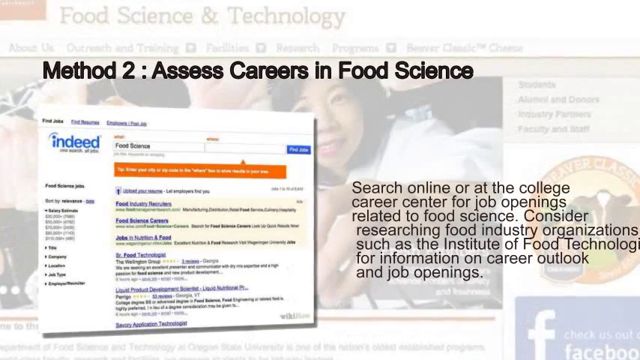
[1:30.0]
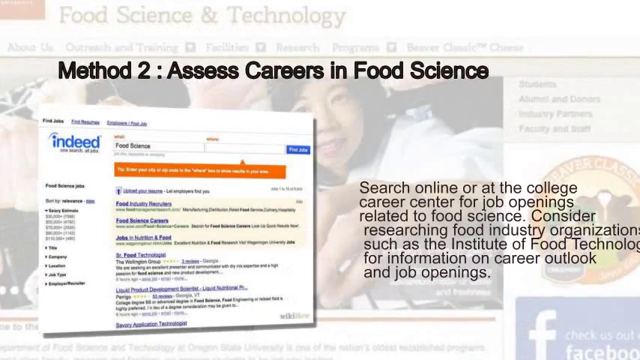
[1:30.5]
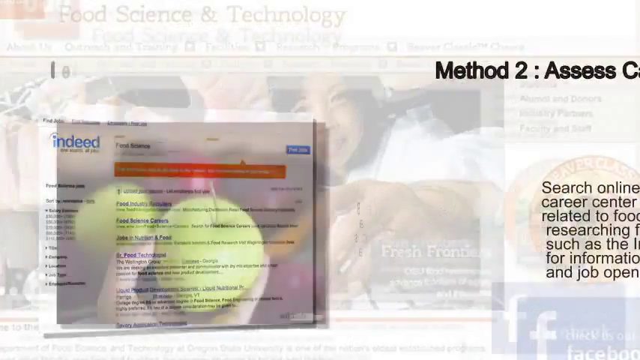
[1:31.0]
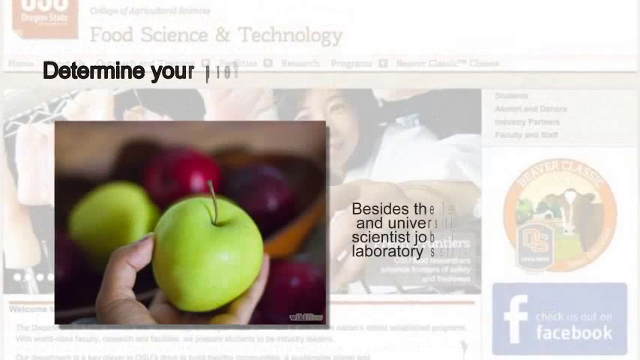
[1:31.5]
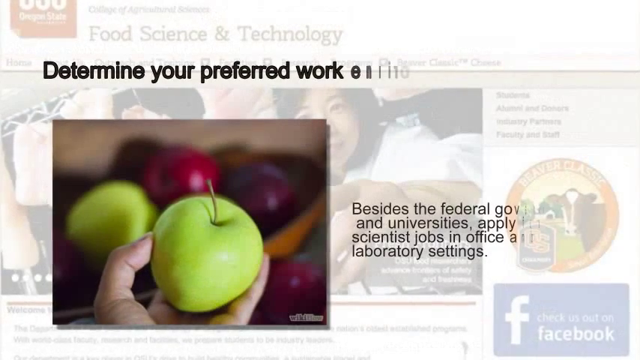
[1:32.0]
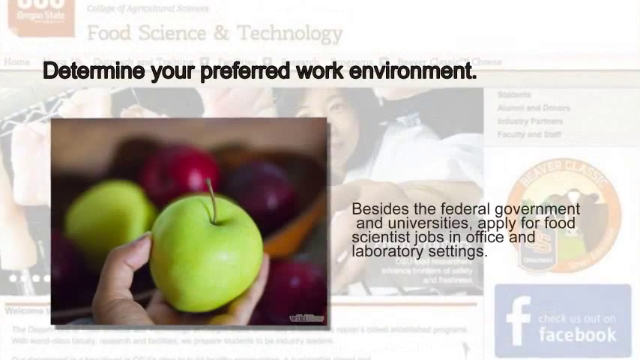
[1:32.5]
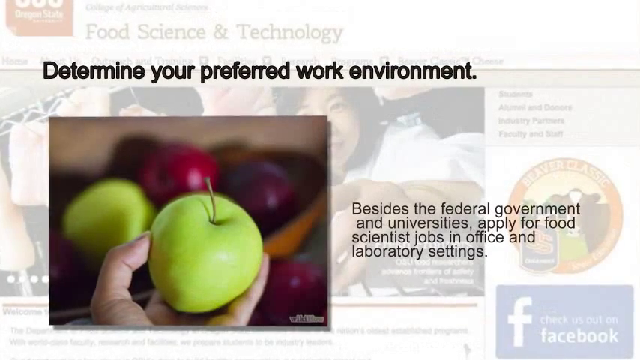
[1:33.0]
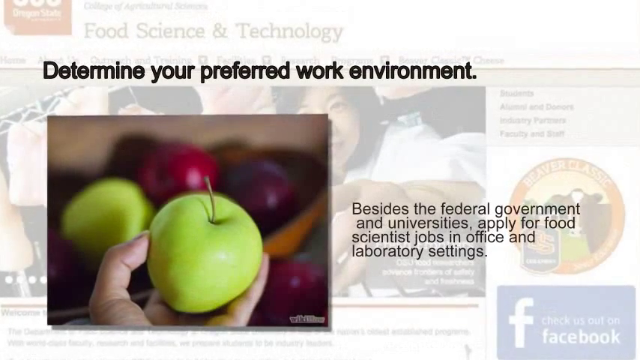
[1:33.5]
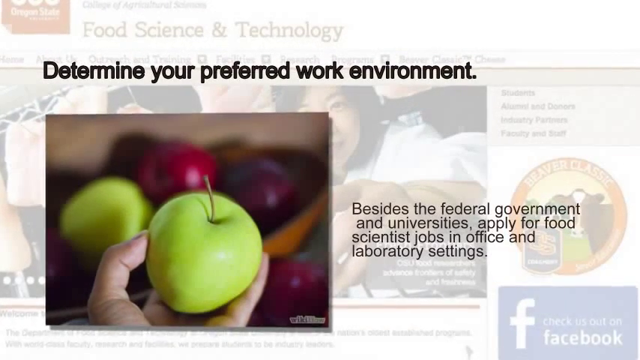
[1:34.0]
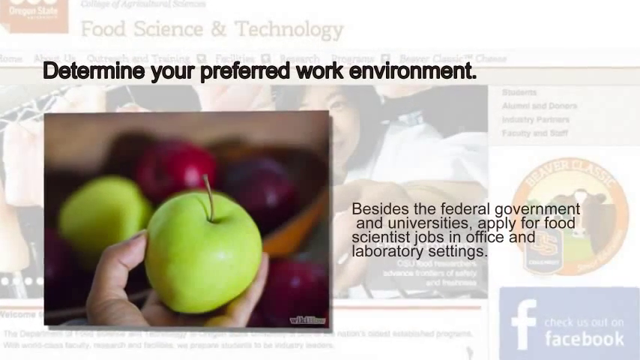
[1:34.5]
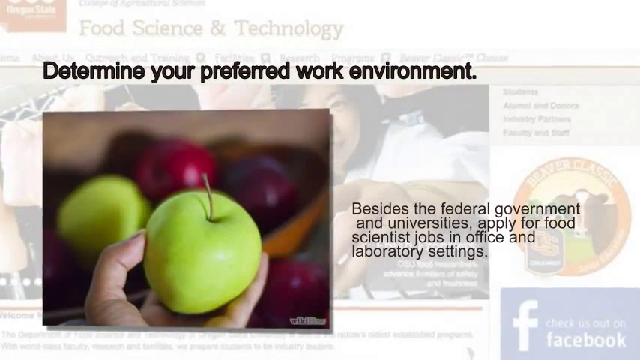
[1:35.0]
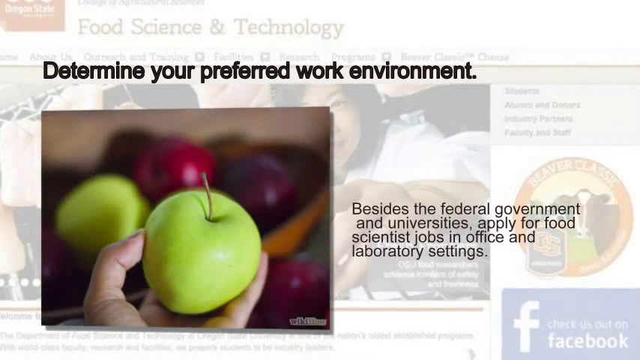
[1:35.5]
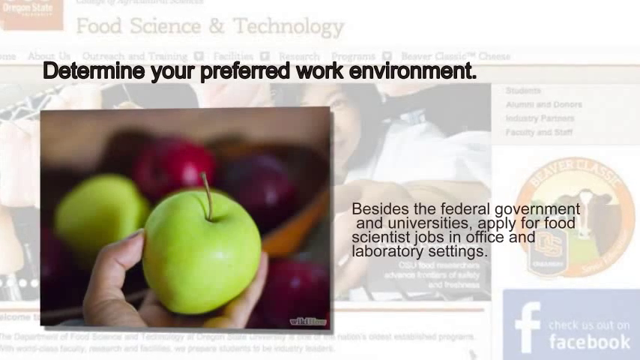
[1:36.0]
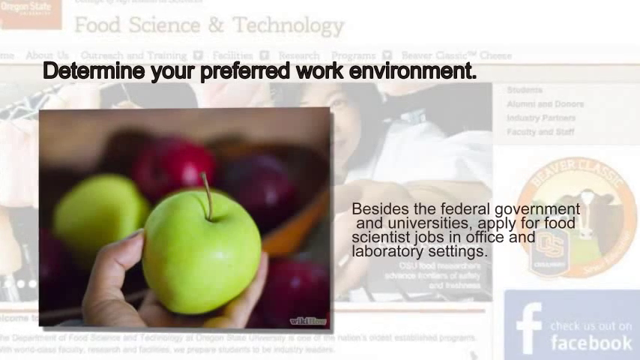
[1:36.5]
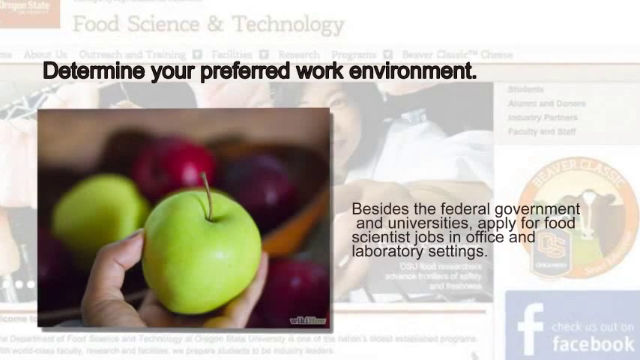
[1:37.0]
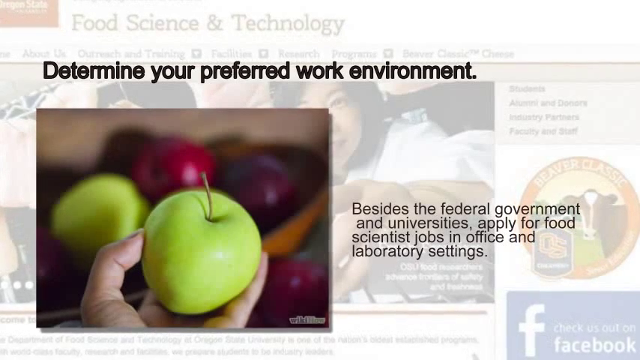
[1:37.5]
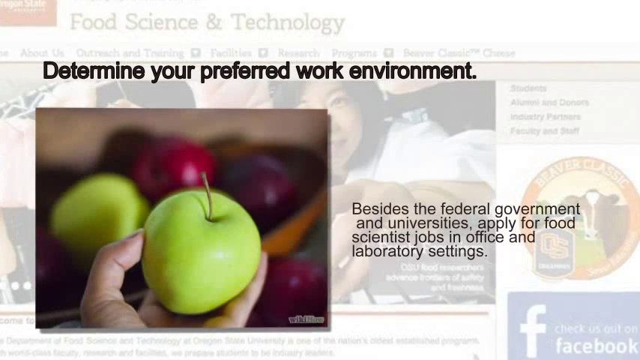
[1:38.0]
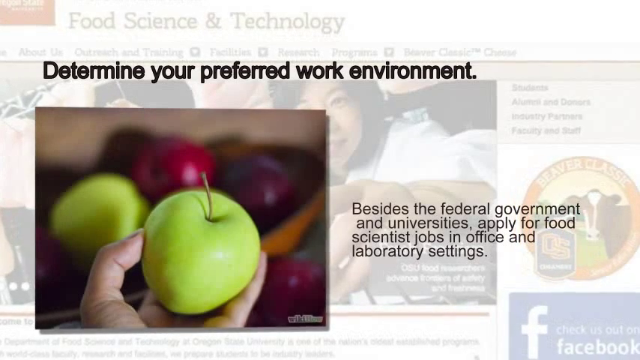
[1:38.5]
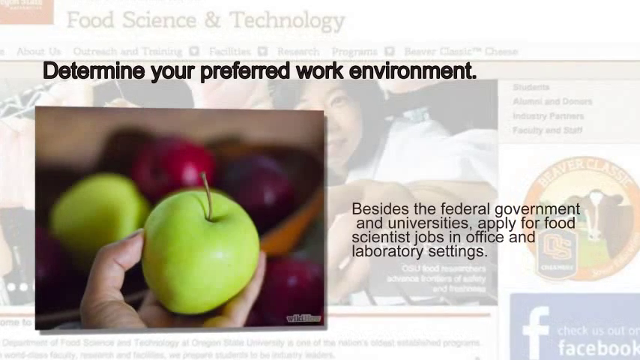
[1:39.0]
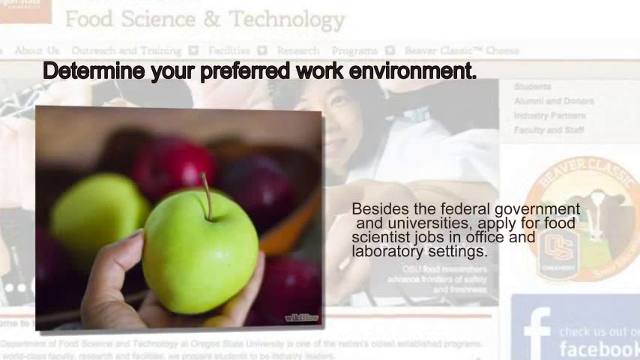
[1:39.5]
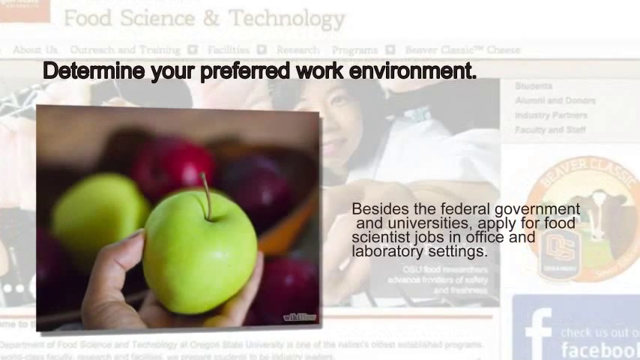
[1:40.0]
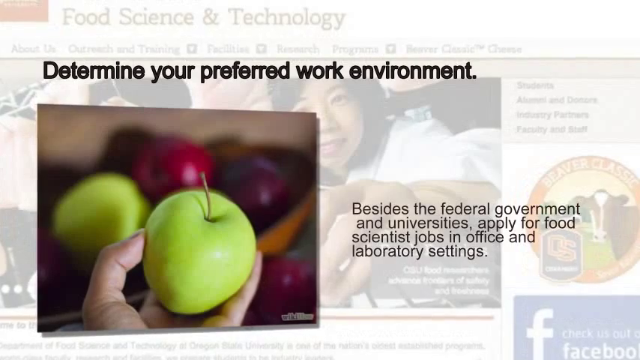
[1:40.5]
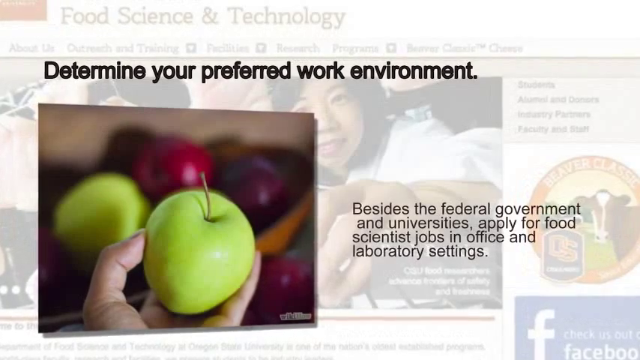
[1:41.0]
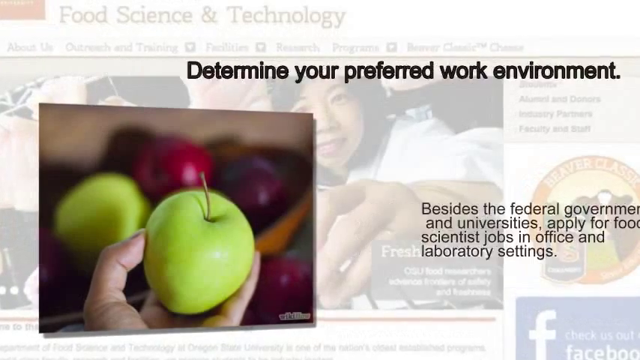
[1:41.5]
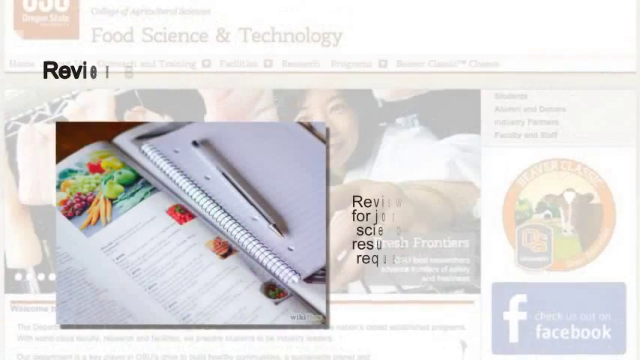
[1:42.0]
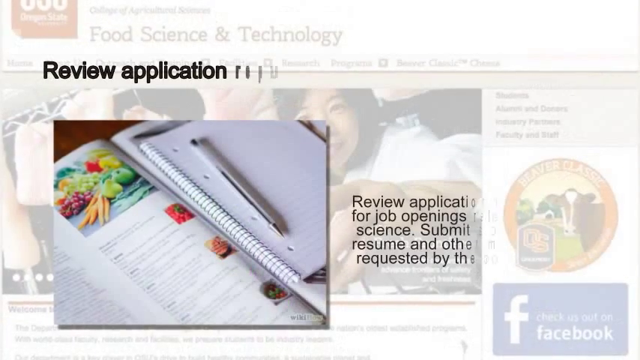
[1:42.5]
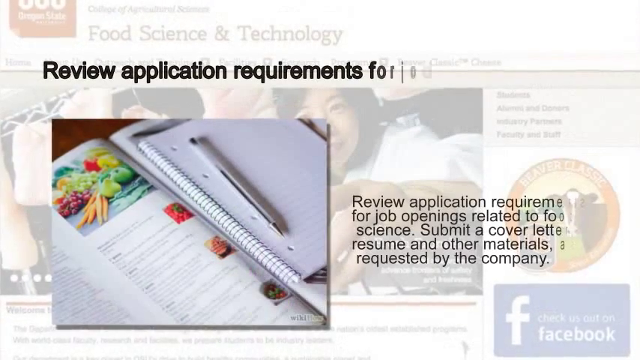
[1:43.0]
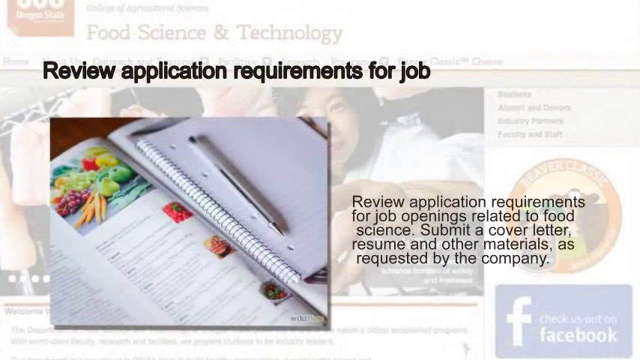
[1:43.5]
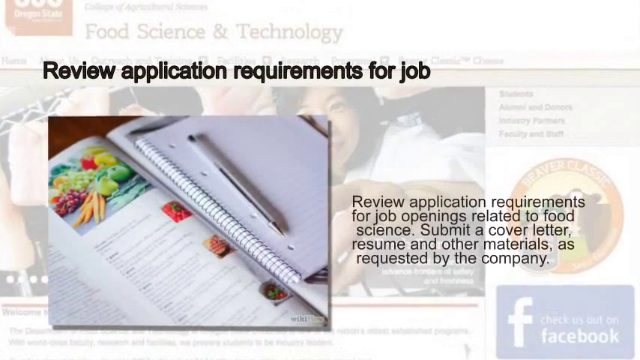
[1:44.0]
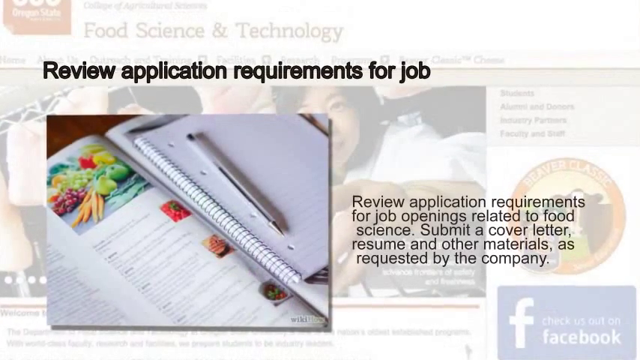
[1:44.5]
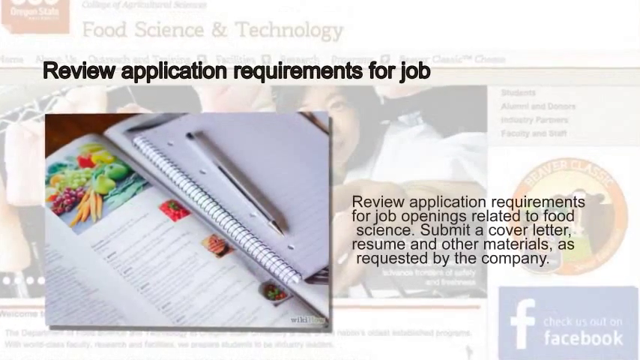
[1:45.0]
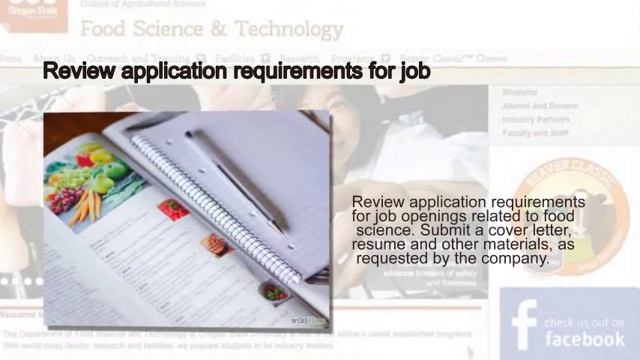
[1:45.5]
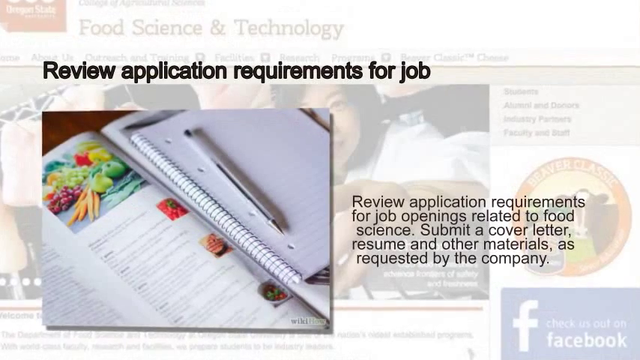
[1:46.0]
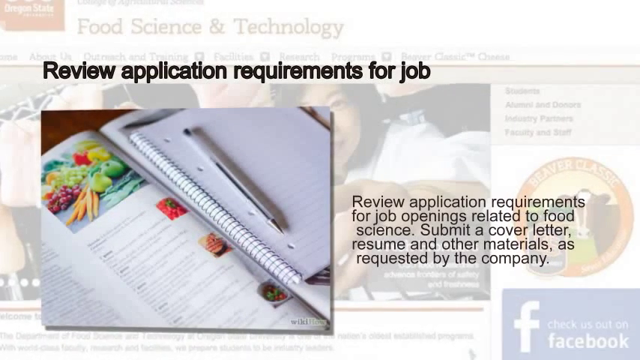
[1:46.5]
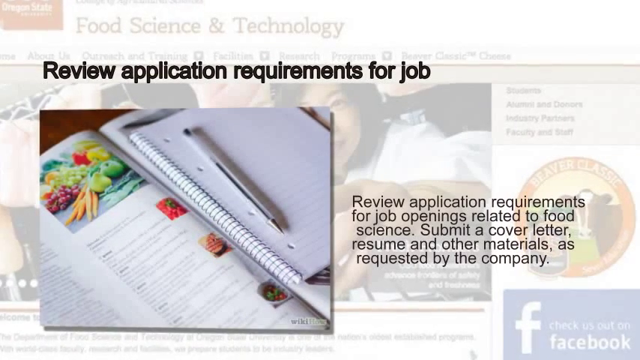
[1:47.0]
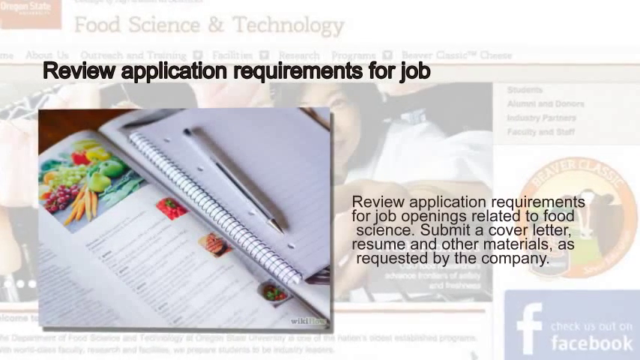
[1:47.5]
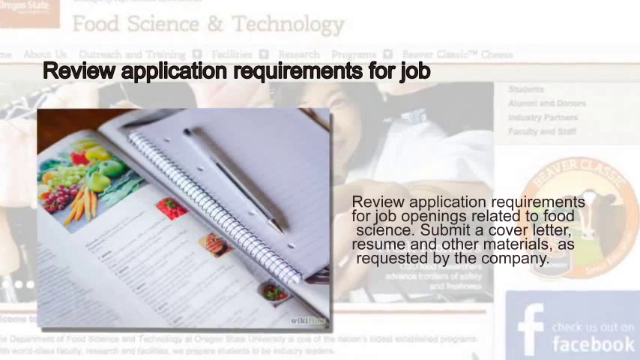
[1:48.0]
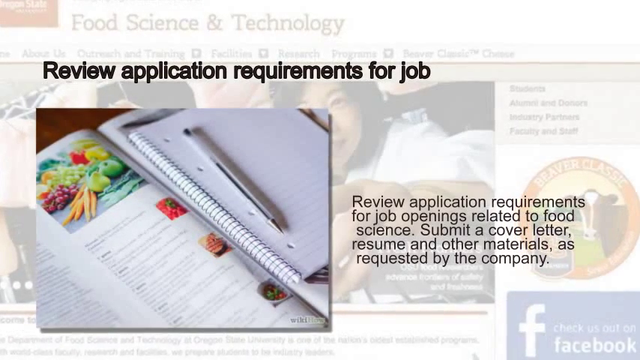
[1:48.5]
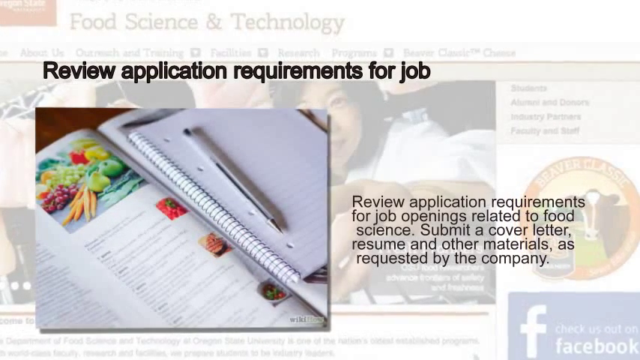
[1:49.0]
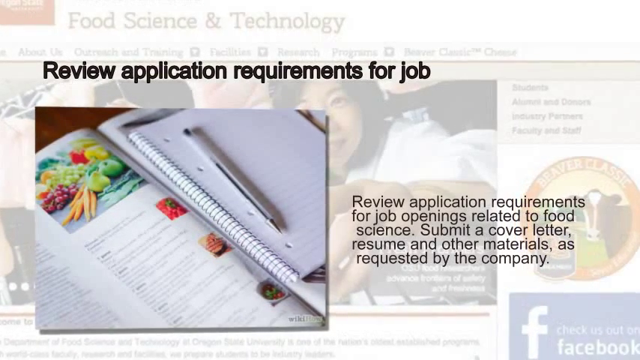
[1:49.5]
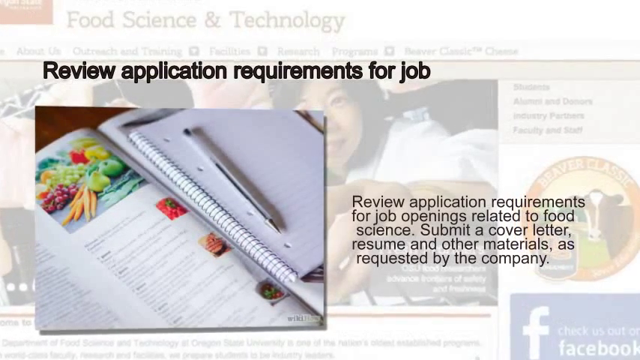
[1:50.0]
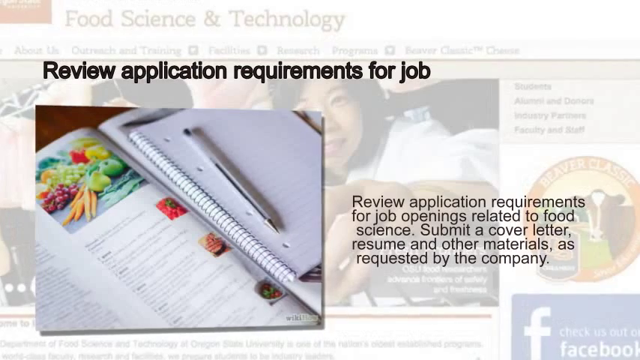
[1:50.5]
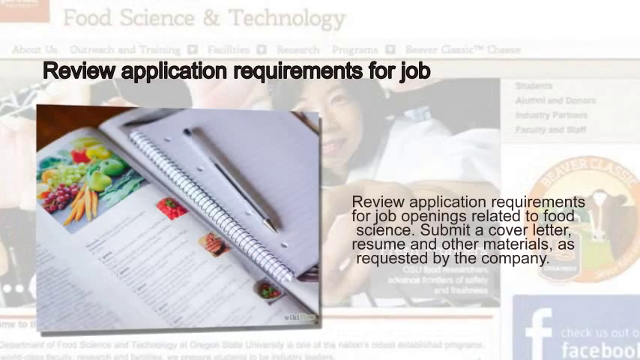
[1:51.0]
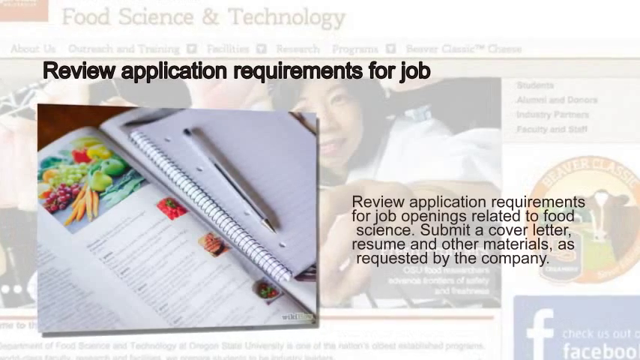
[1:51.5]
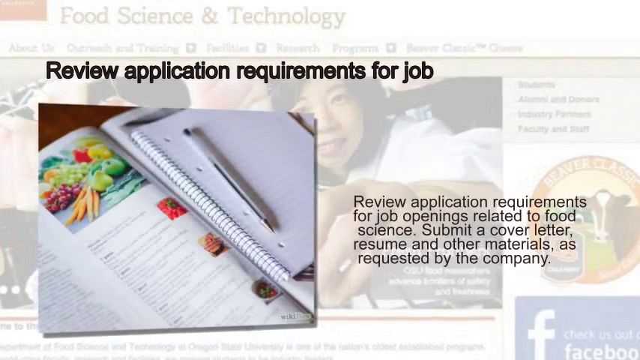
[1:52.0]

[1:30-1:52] The method two text about assessing careers in food science is on screen. In the background the food science and technology article is still fading away, with the lady and parts of the man visible. The video moves to the image of the hand holding the apple, with other red and green apples in the background. Text reads "determine your preferred work environment. Besides the federal government and universities, apply for food scientist jobs in offices and laboratory settings." The faded food science and technology background remains. The final image shows a pen, a notebook, a textbook and drawings of fruits, with the text "review application requirements for job openings related to food science. Complete a cover letter, resume and other materials as requested by the company."